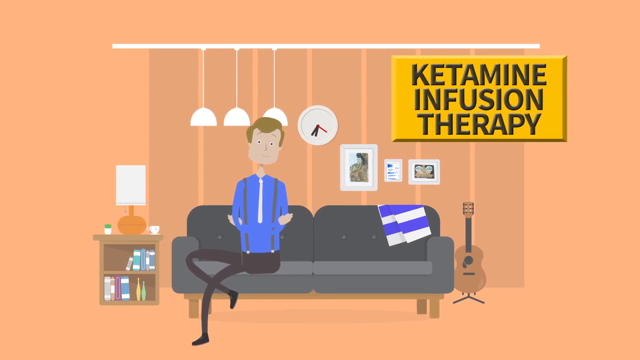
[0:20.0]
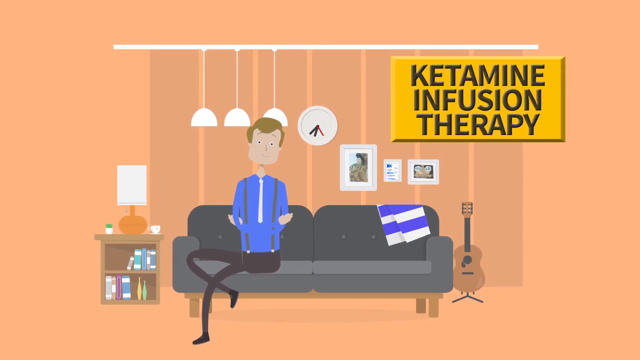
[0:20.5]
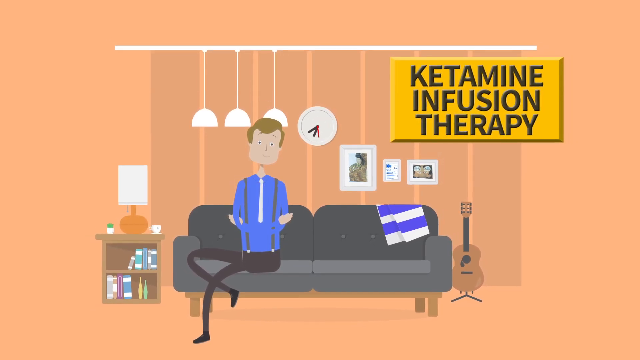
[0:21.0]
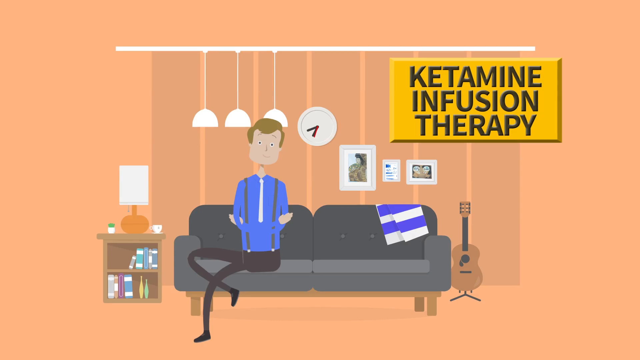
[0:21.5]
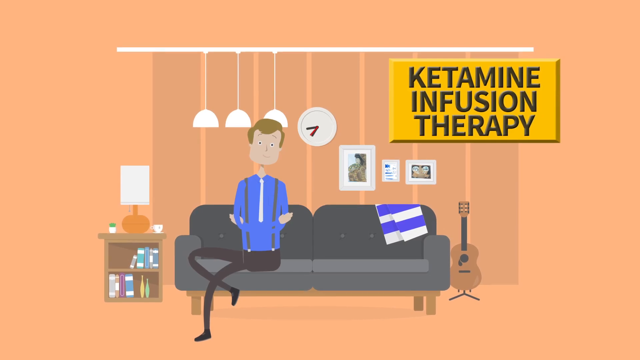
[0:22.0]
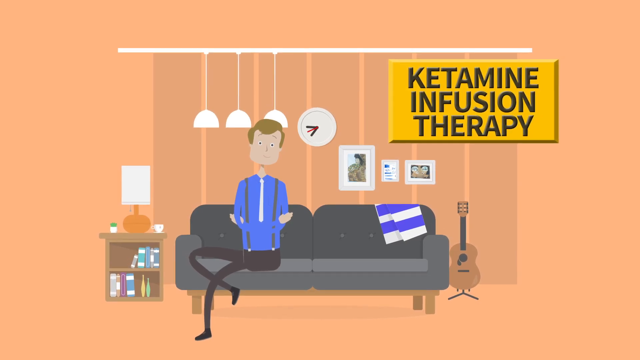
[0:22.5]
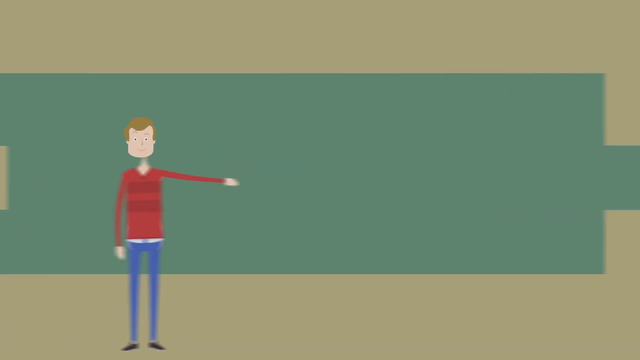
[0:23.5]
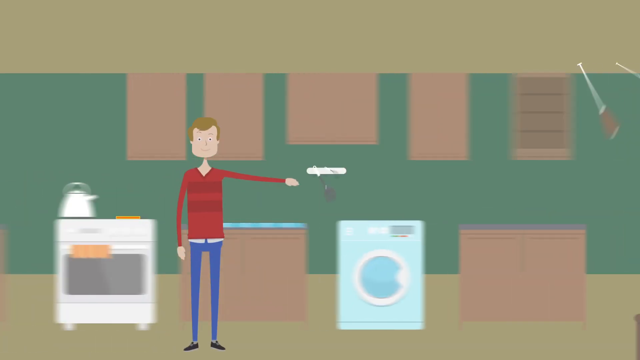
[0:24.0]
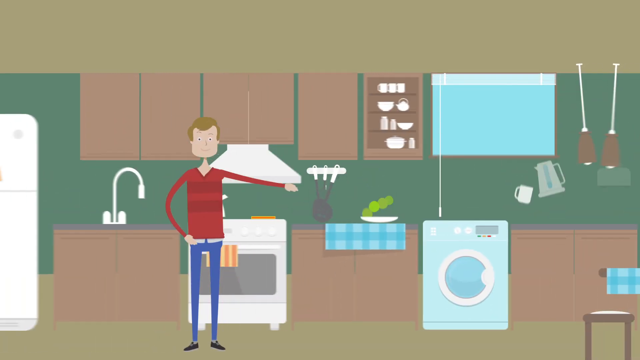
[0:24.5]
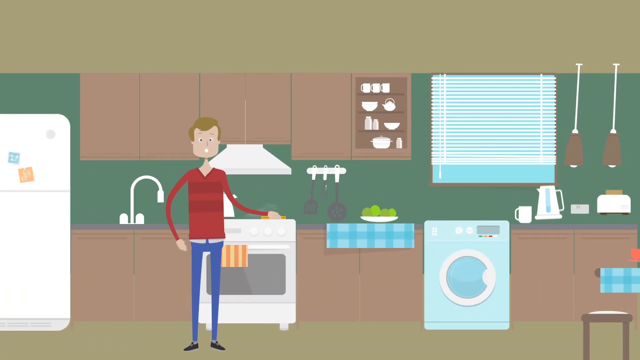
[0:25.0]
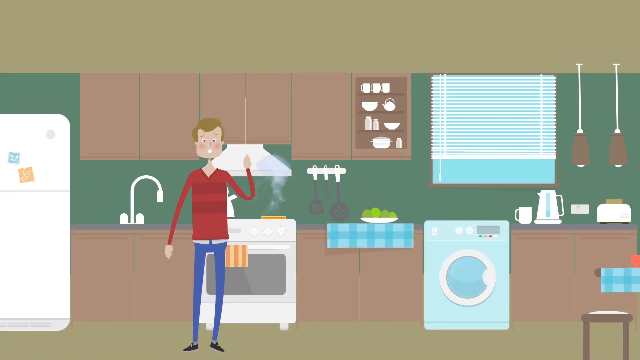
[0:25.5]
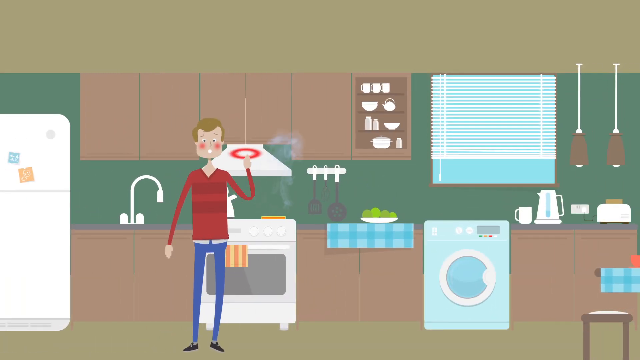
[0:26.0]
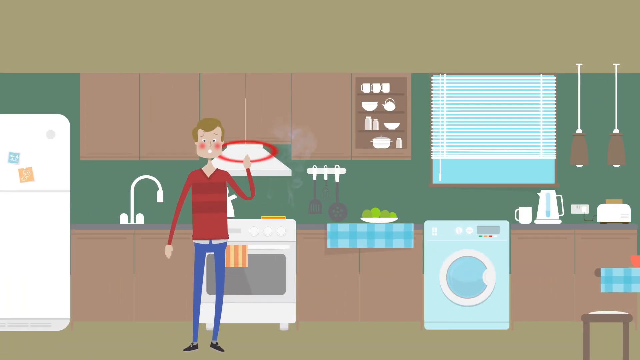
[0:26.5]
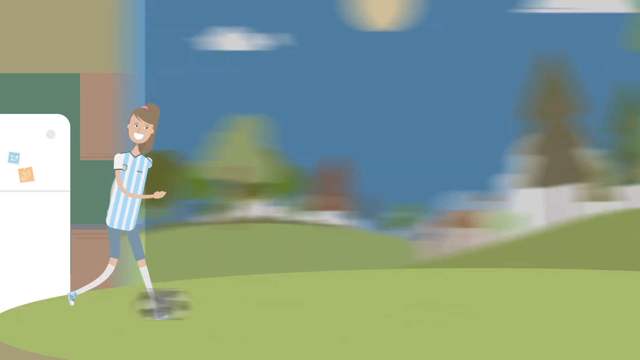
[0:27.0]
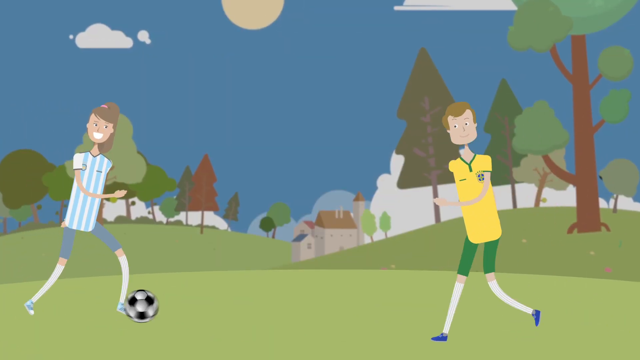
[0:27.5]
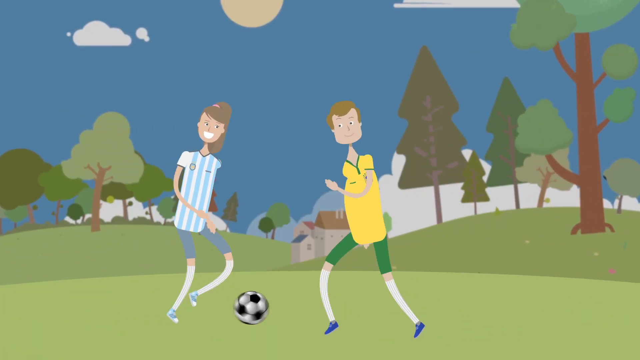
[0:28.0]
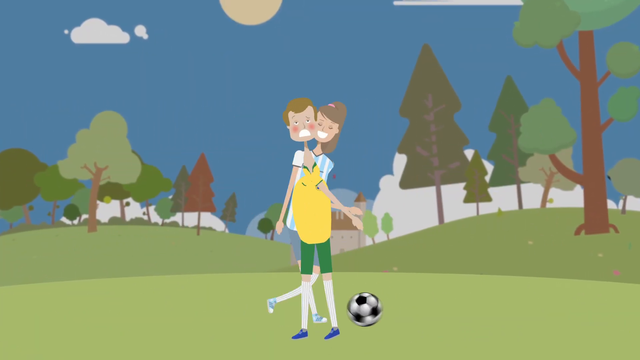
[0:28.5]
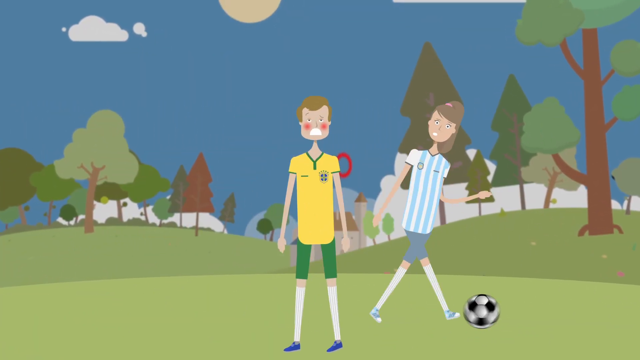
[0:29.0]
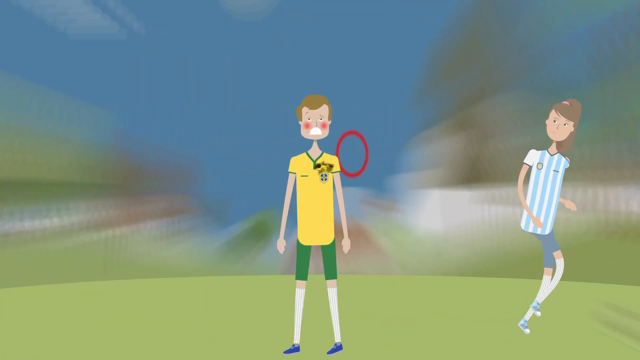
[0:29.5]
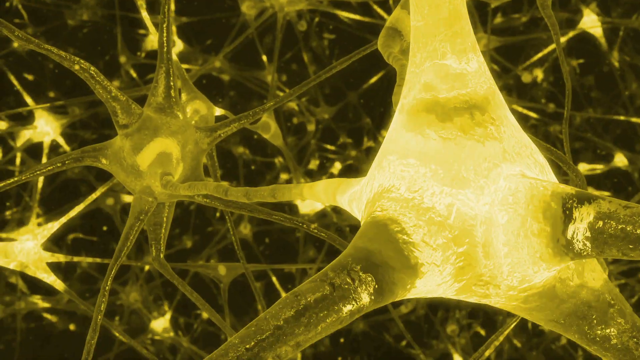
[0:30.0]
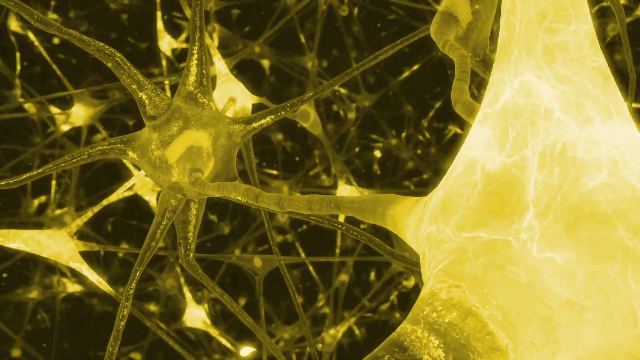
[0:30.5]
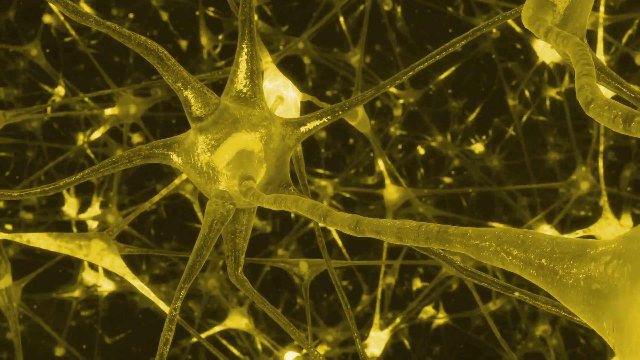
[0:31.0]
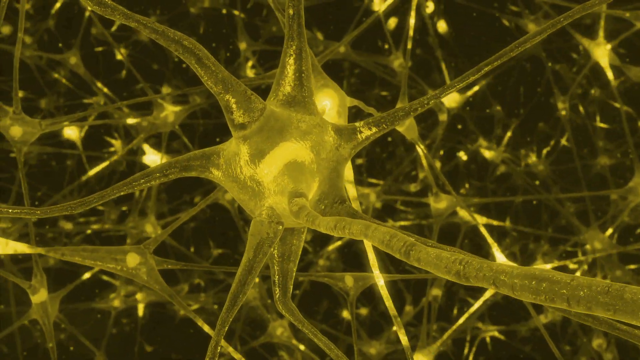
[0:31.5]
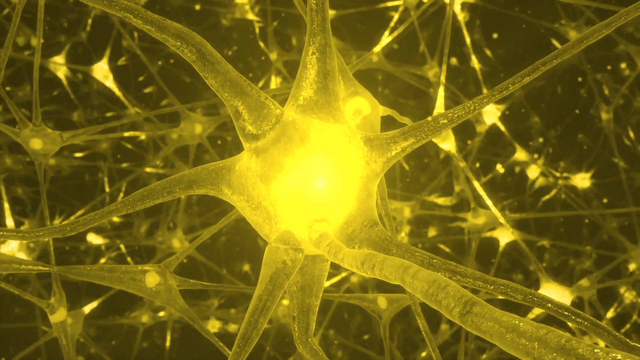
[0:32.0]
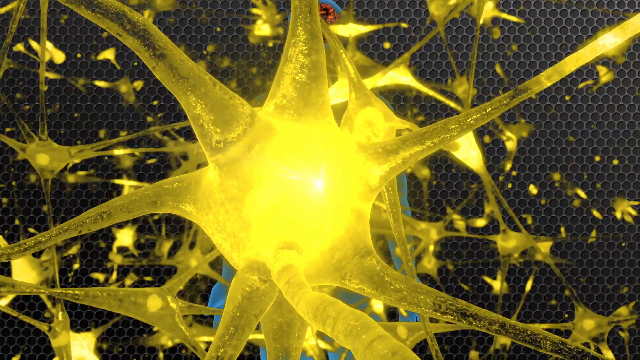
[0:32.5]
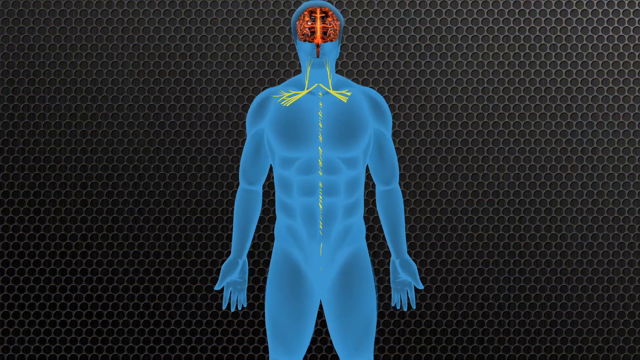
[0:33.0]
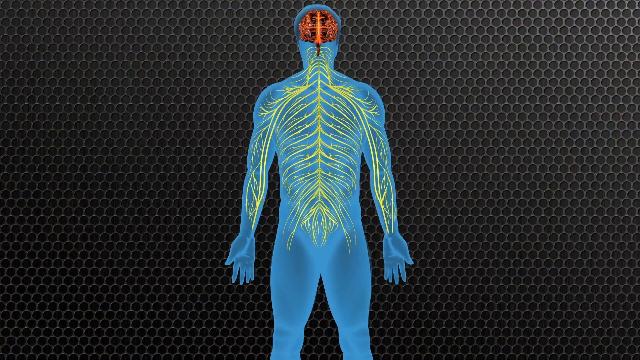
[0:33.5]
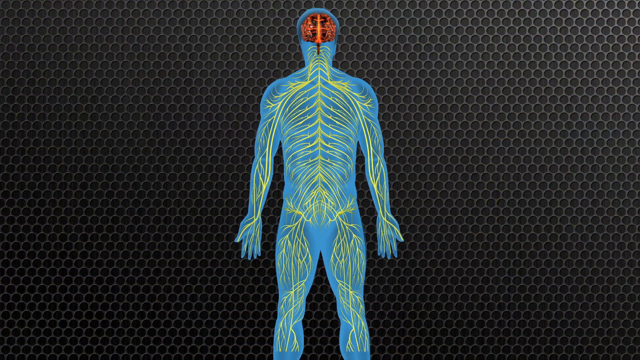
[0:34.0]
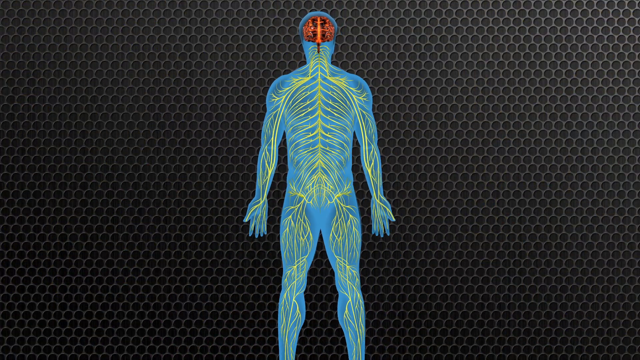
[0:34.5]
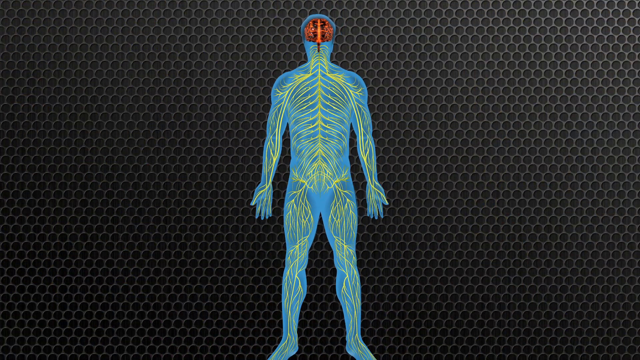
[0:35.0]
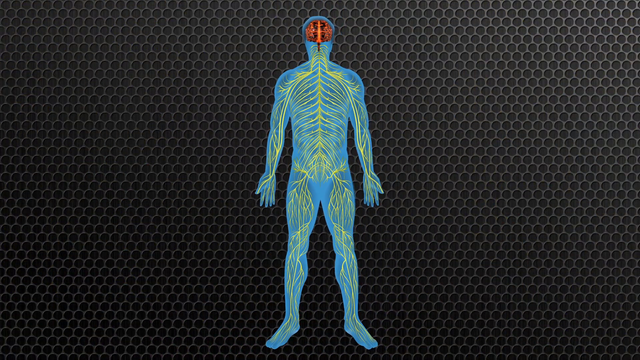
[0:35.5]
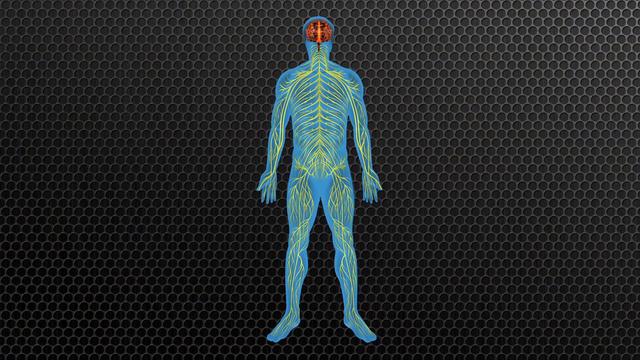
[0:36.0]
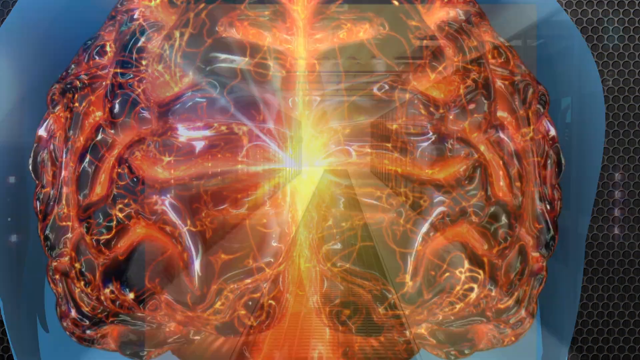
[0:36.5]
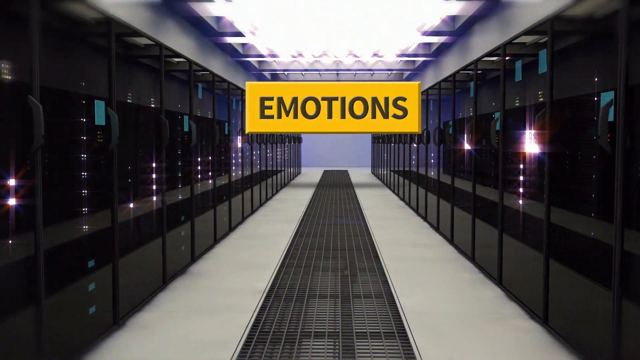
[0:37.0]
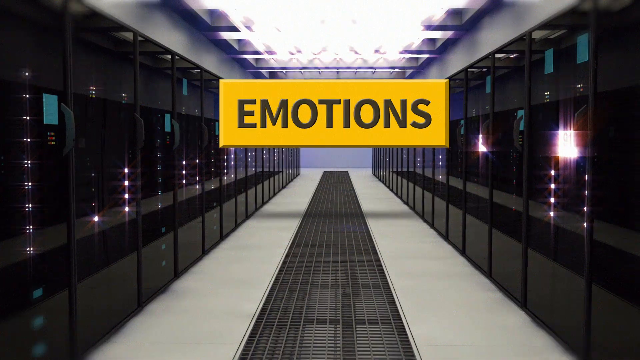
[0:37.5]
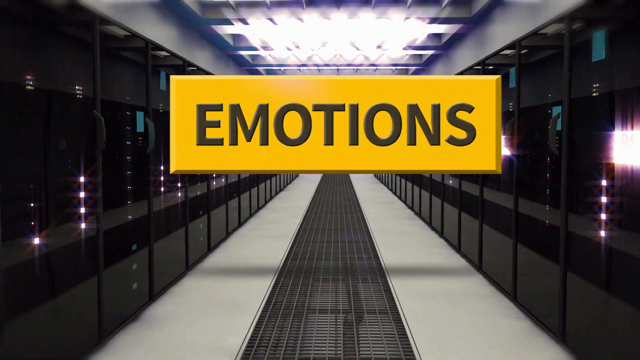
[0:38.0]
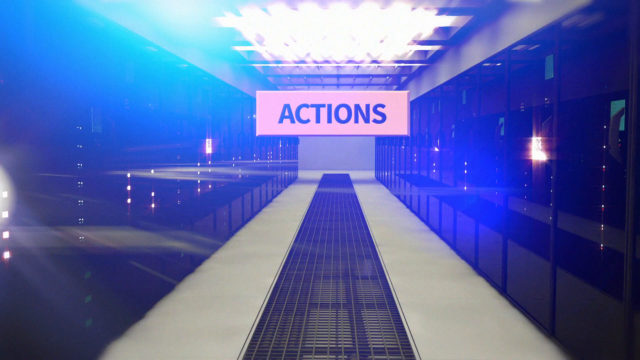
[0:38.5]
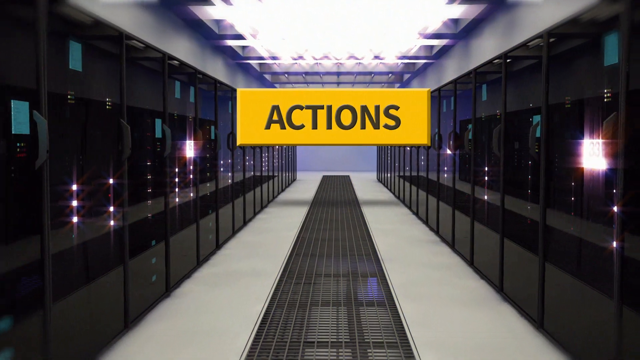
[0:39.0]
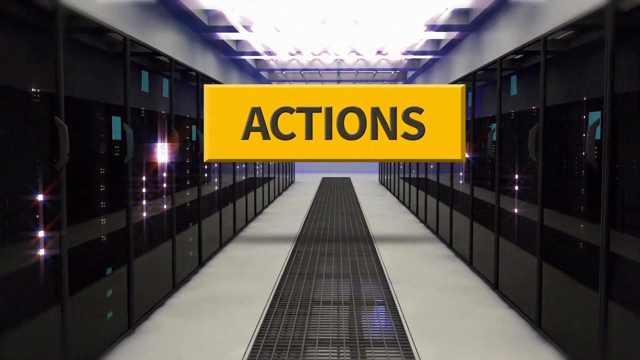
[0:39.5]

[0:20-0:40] The patient sits on the couch with his arms crossed while the words "ketamine infusion therapy" remain on the screen. The scene transitions to a kitchen with brown cabinets, a window, the stove, the fridge and lighting. The patient is at the stove with red cheeks; he has hurt his finger, and a red circle appears around the hurt spot. Next comes an outdoor scene with green land, a blue sky and green trees. He is in the grass, and a woman in a blue and white striped shirt kicking a soccer ball passes by him and hits him on the shoulder. He immediately has red cheeks, hurt from the hit to his shoulder, and the red ring shows up. Many nerve endings are then shown as the inner workings of the body appear, followed by an anatomy of the body with the skeleton, the nerve endings and the brain. The view zooms into the brain to show the words "emotions" and "actions".